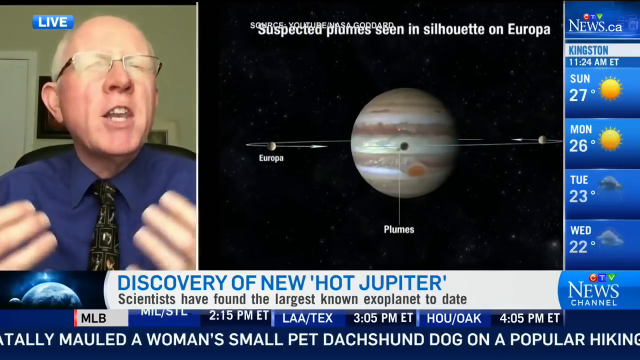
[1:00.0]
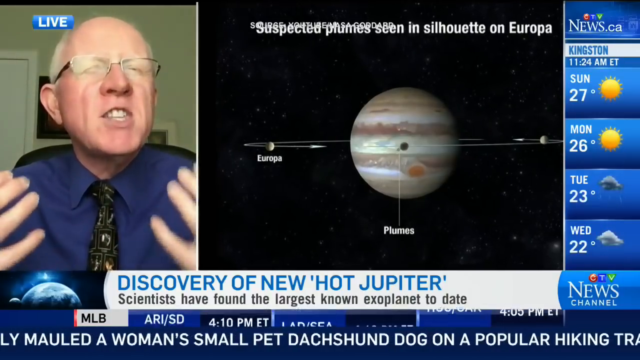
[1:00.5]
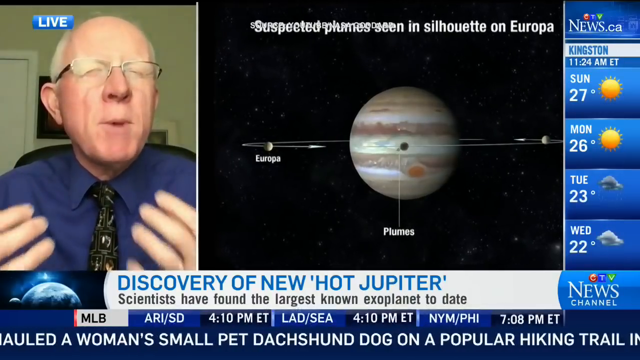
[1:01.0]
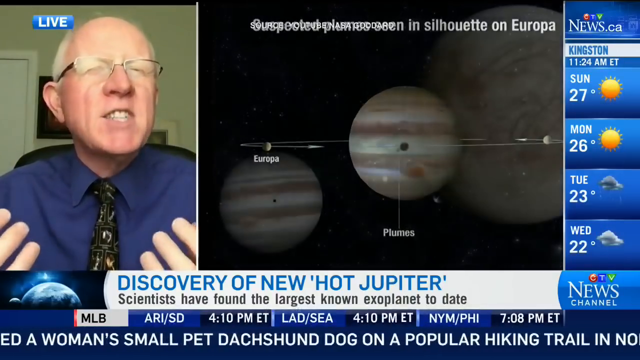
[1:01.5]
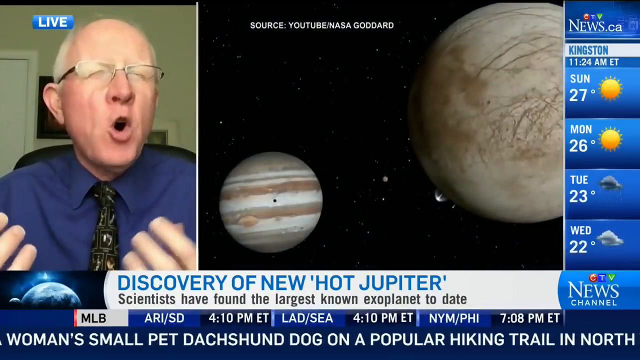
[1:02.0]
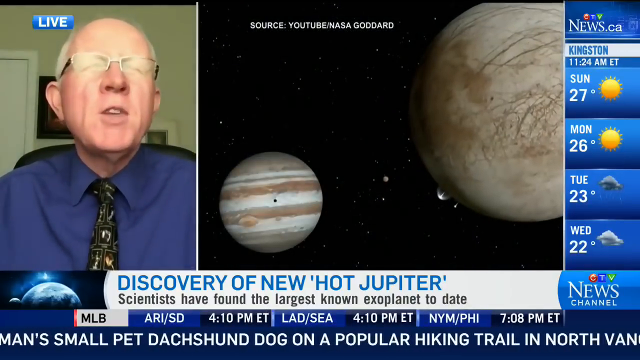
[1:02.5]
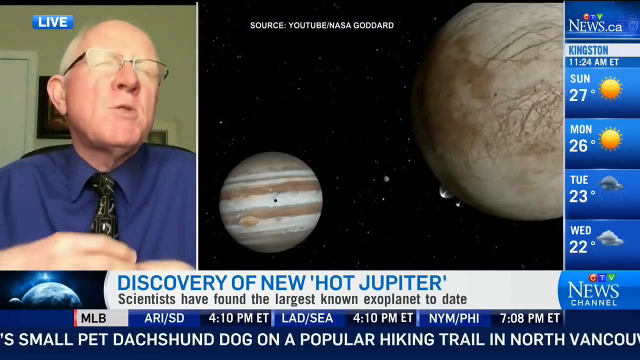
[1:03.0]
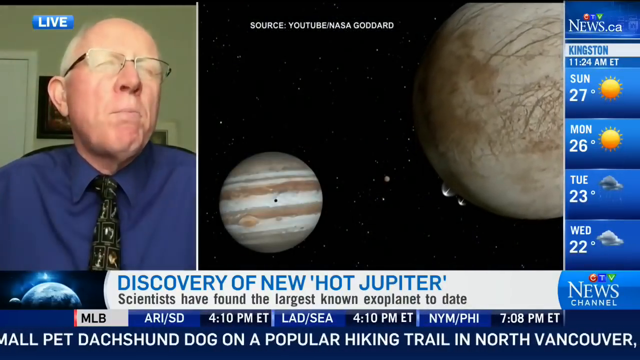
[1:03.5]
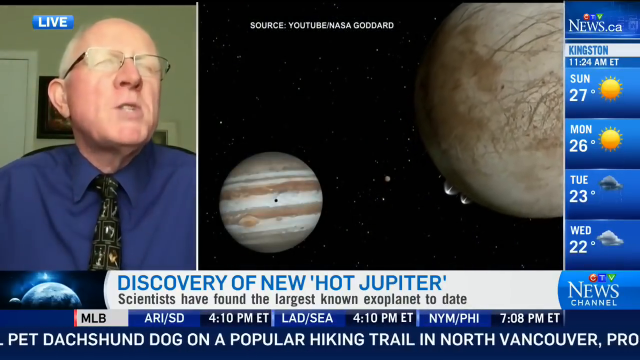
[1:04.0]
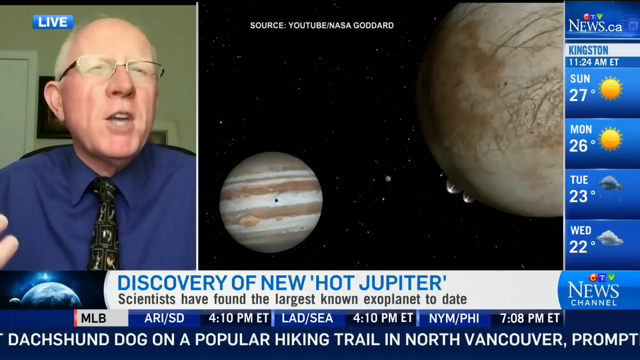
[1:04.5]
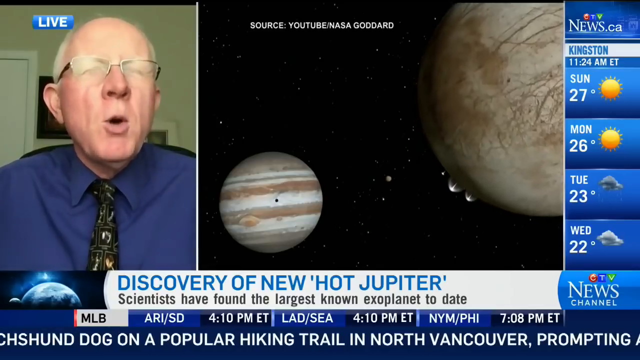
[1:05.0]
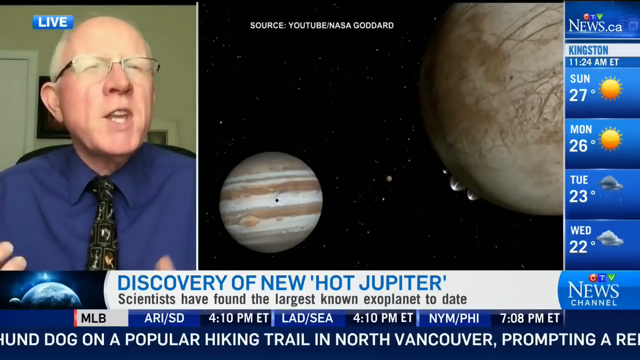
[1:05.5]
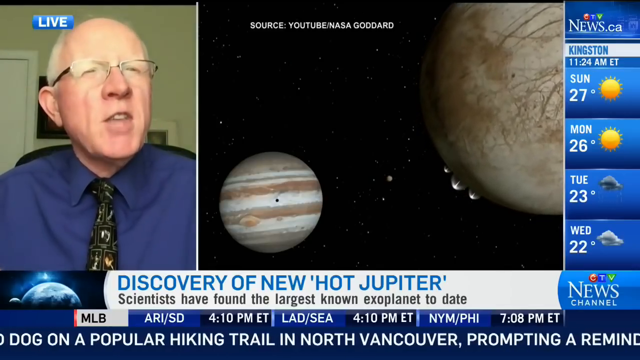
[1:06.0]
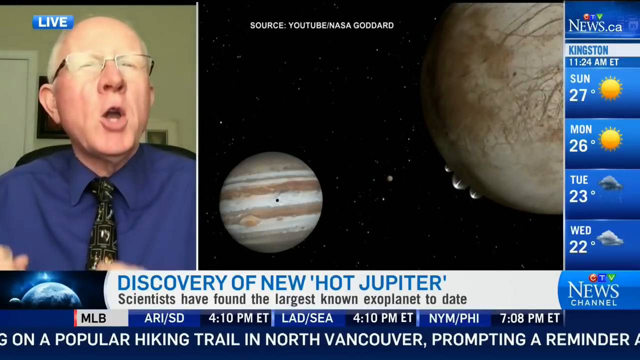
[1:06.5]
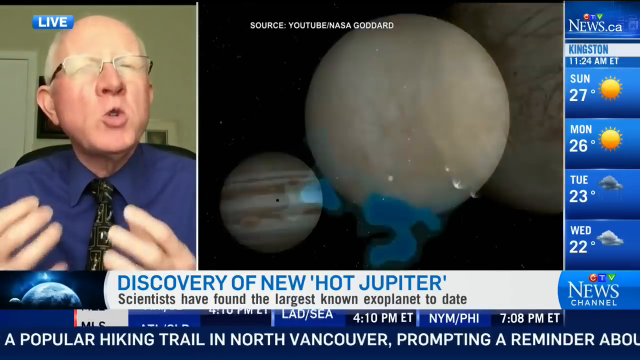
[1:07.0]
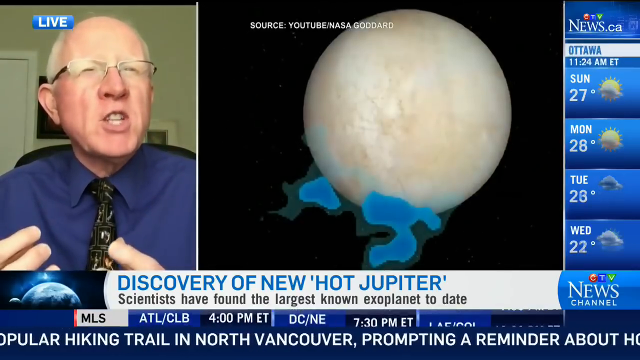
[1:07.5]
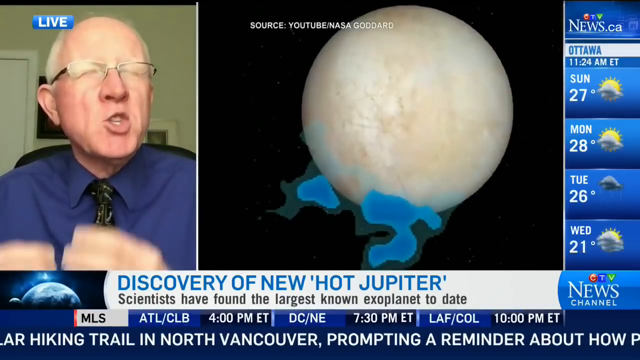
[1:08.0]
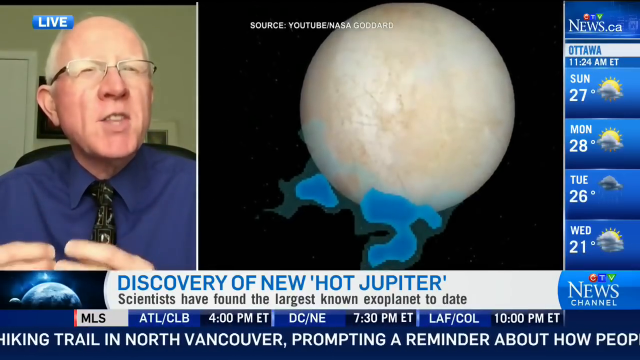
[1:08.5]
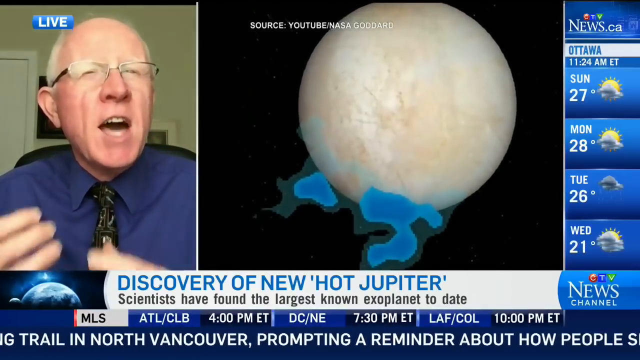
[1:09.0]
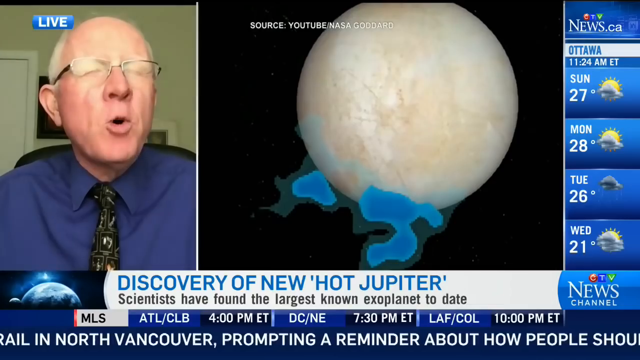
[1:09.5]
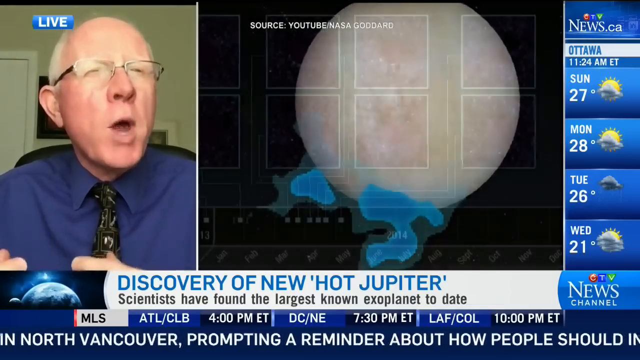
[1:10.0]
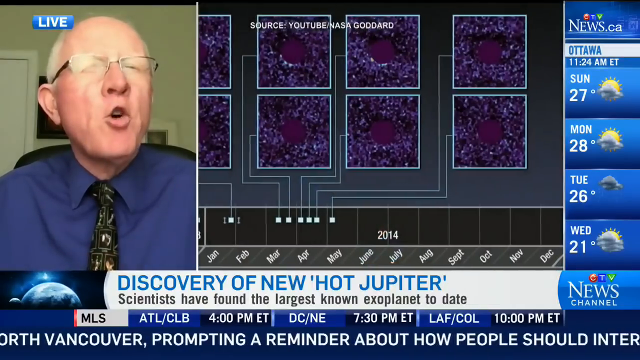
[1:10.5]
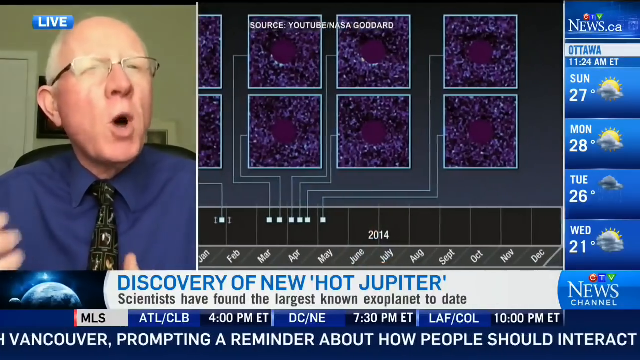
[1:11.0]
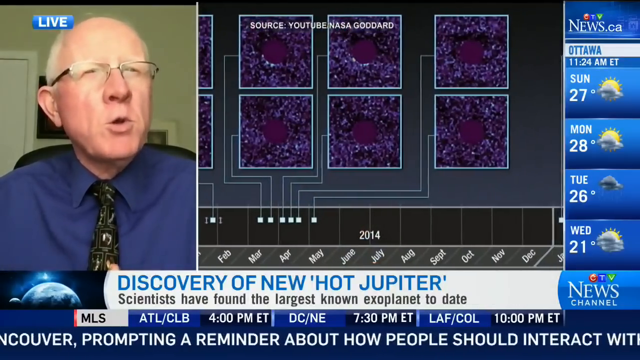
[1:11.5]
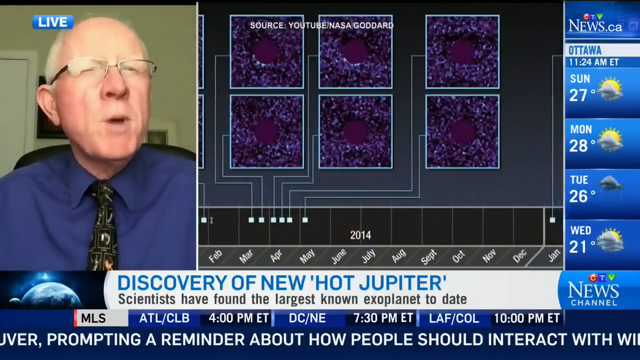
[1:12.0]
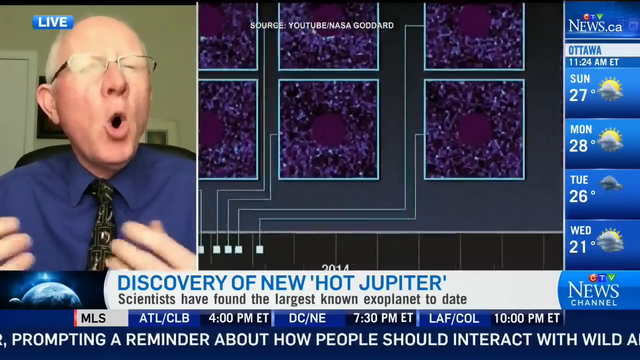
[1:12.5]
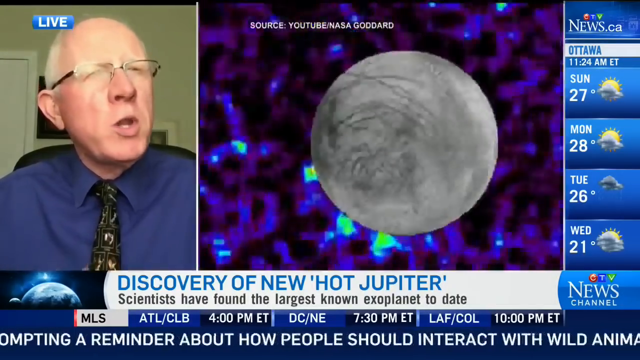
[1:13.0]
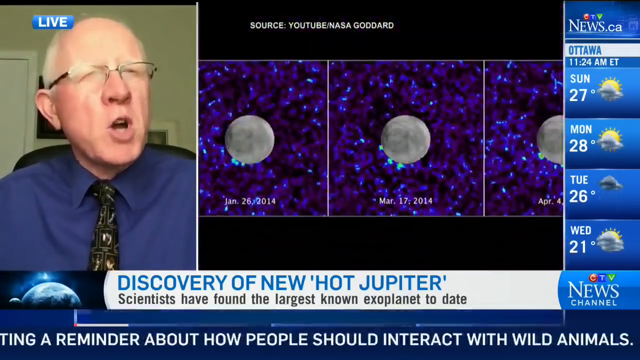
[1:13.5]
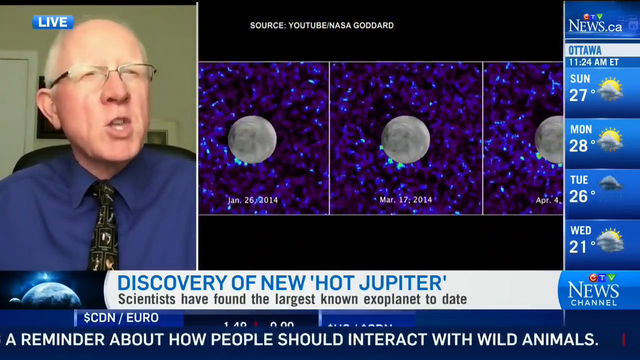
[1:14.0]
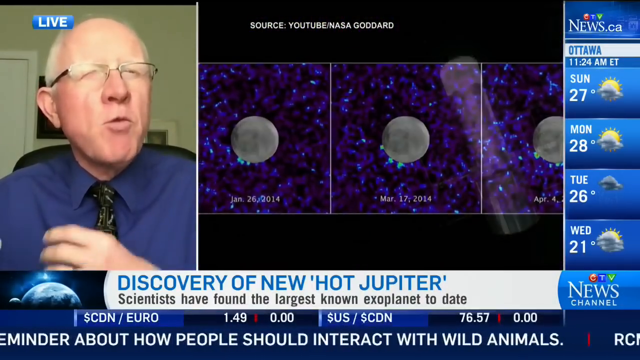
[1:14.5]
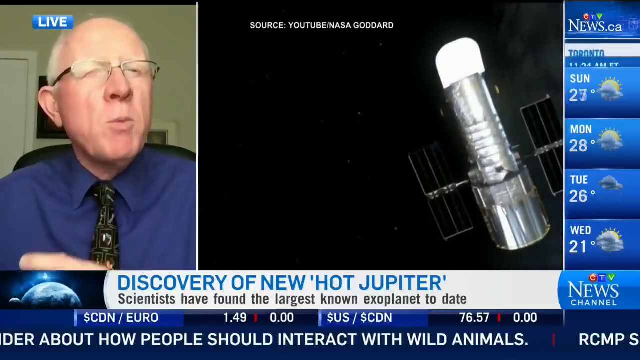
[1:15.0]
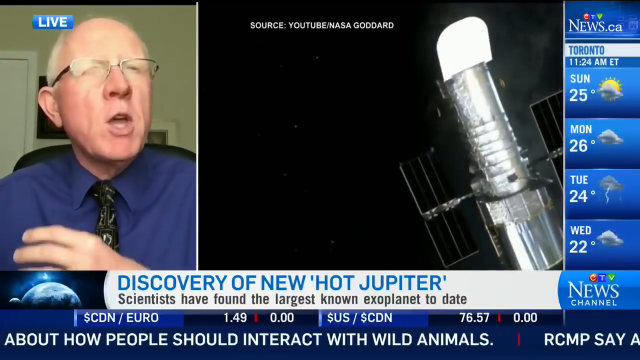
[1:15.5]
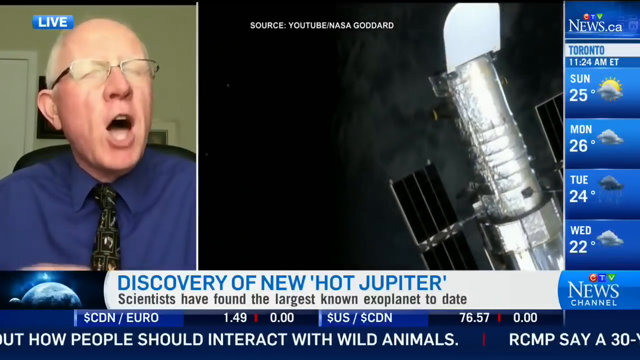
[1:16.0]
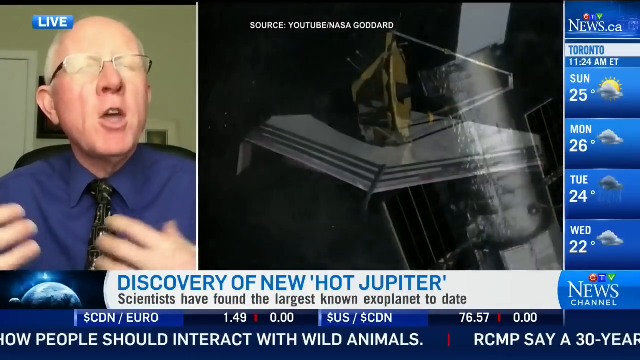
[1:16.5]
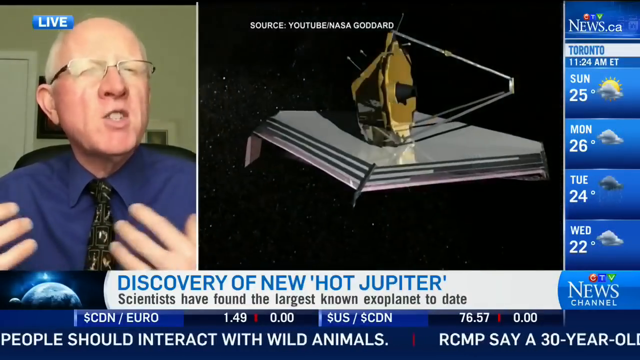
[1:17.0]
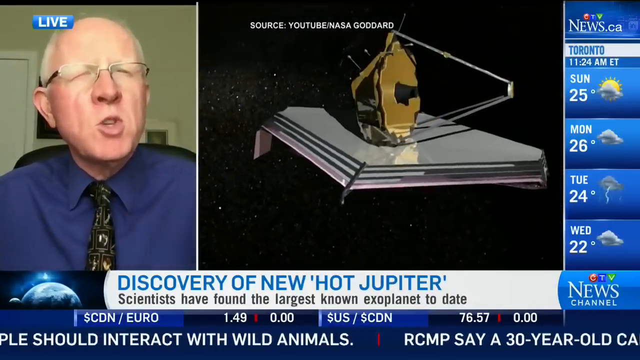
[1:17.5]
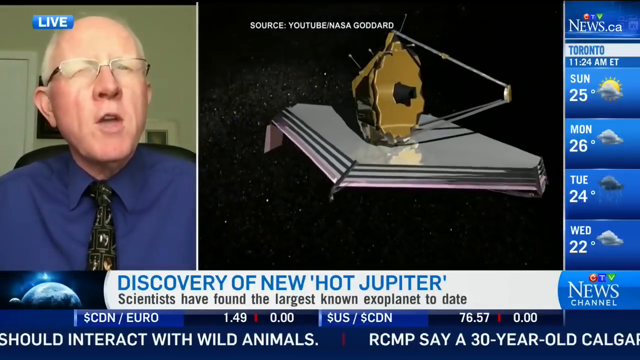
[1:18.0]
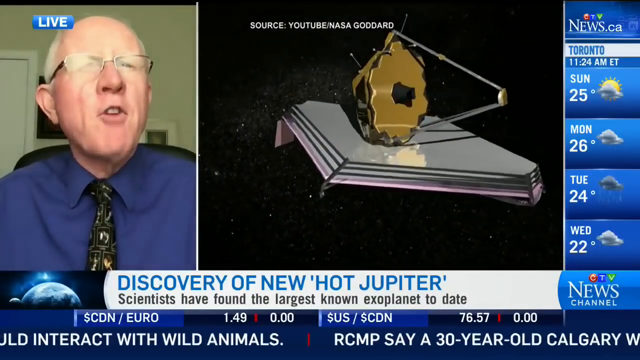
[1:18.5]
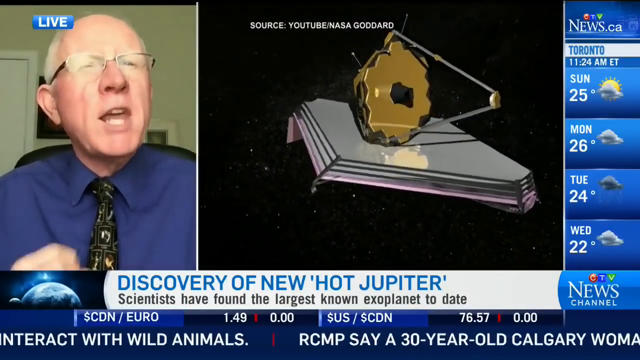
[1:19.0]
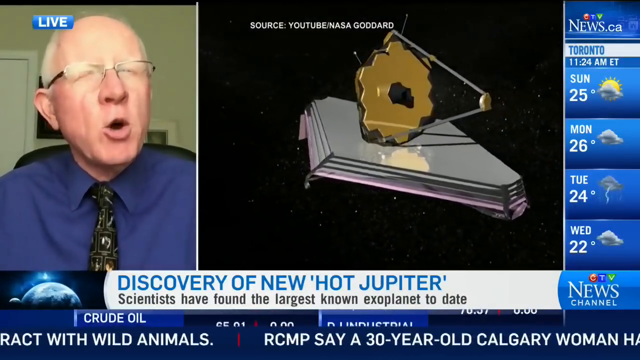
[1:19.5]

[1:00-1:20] Erin Paul continues the conversation with Professor Delaney. The weather forecast for Kingston shows a sunny 27 degrees on Sunday, sunny and 26 degrees on Monday, 23 degrees and cloudy on Tuesday, and 22 degrees and cloudy on Wednesday. Professor Delaney gestures with both hands as he makes a point about the images of Jupiter. Images of space probes that have visited the planet in the past are shown. A news item states that the death of the Dachshund occurred in North Vancouver and that people are advised to stay well away from wild animals and not interact with them. The forecast for Ottawa shows 27 degrees and sunny intervals on Sunday, 28 degrees and sunny intervals on Monday, cloudy and 26 degrees Celsius on Tuesday, and sunny intervals and 21 degrees on Wednesday. An image shows different readings taken in 2013, which helped identify the exoplanet, the largest known to date.